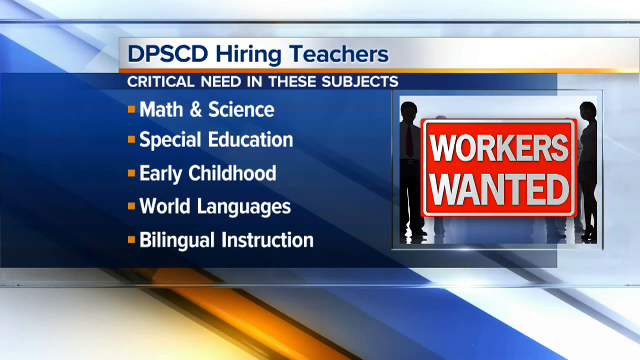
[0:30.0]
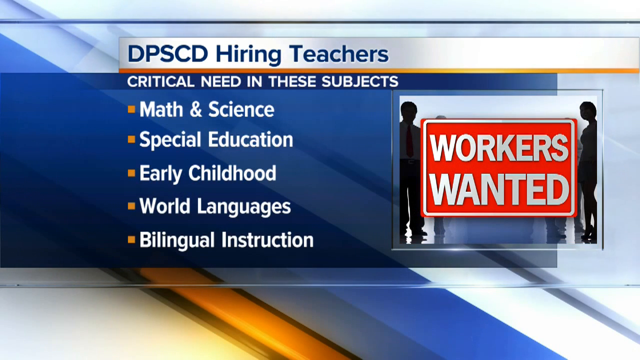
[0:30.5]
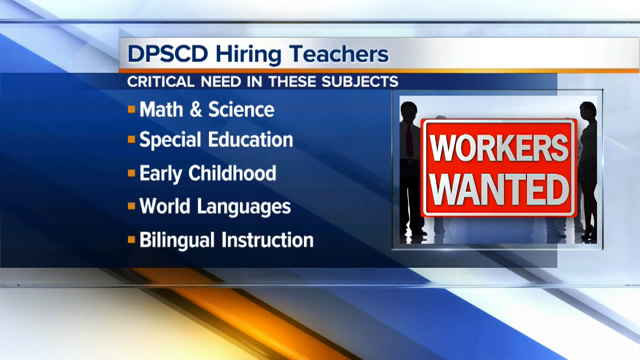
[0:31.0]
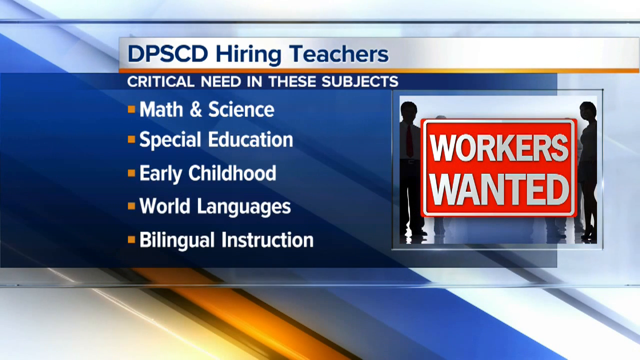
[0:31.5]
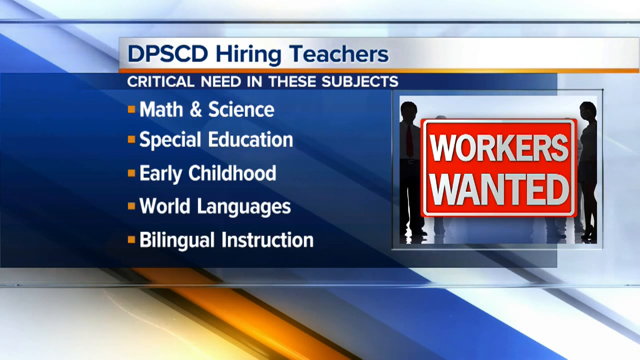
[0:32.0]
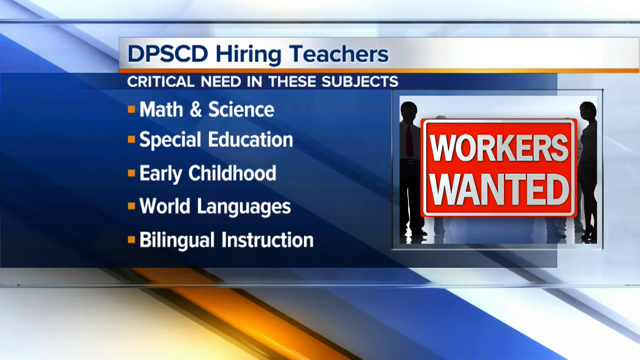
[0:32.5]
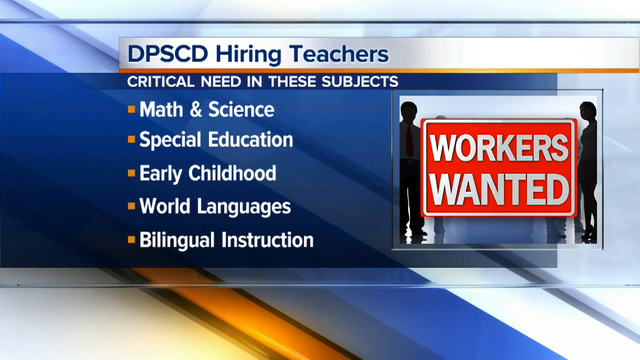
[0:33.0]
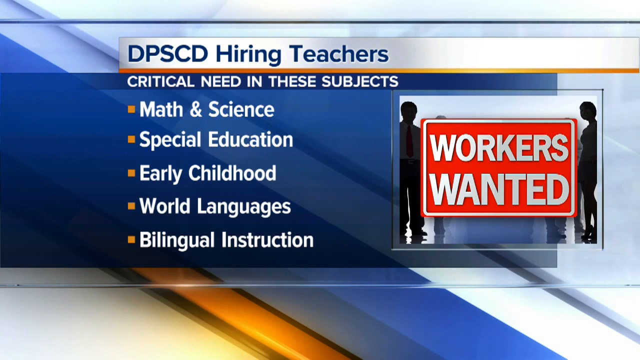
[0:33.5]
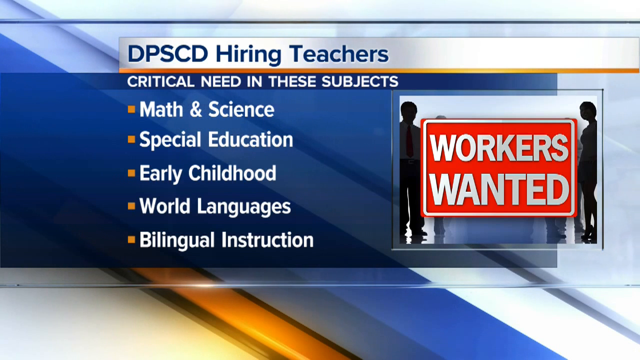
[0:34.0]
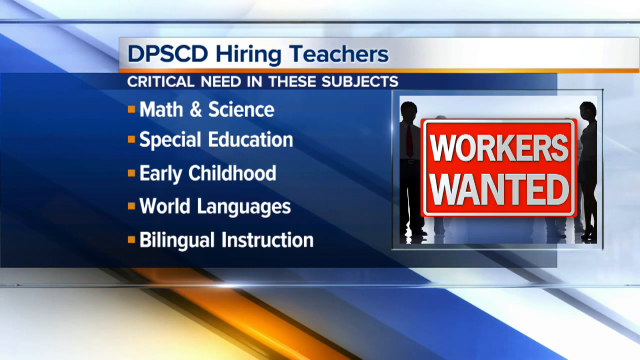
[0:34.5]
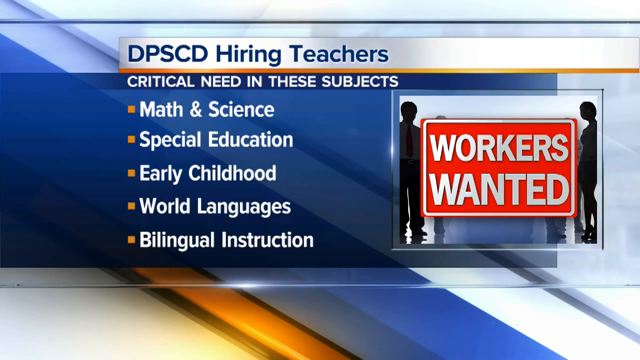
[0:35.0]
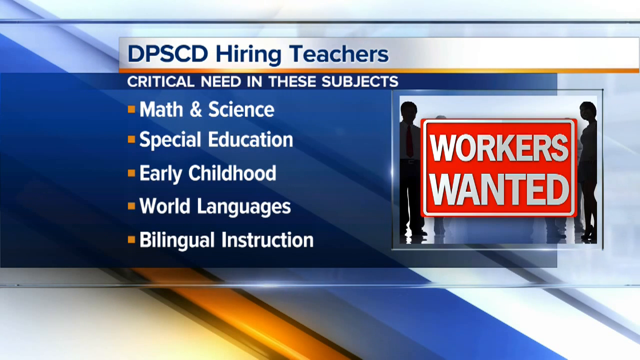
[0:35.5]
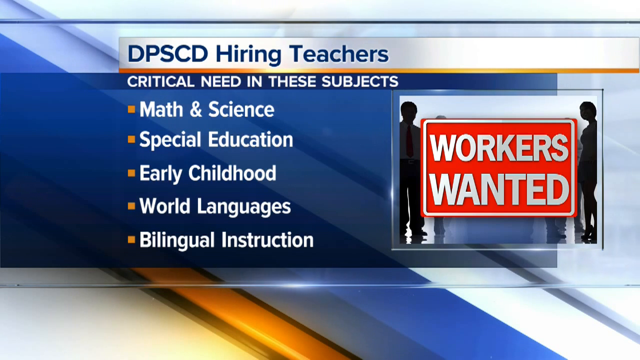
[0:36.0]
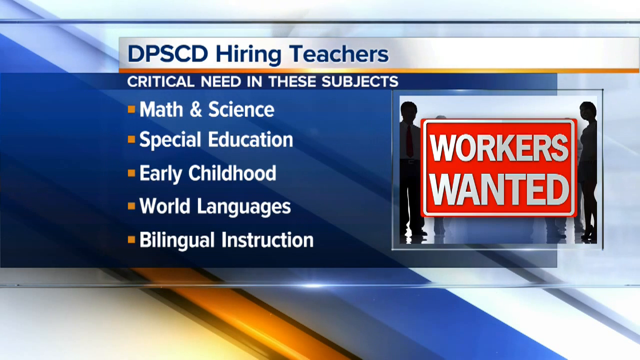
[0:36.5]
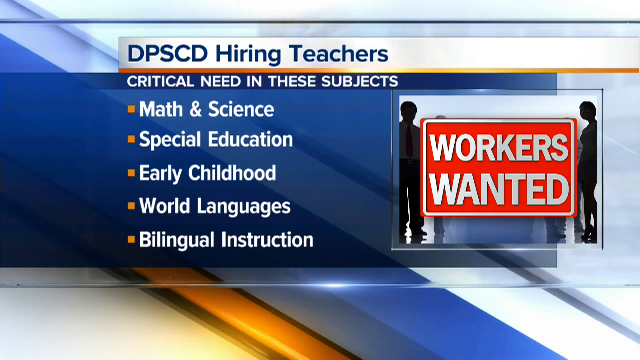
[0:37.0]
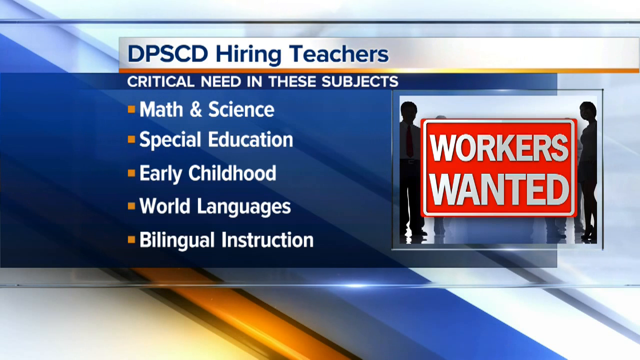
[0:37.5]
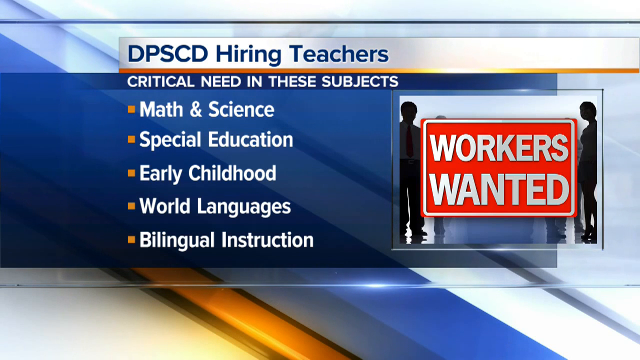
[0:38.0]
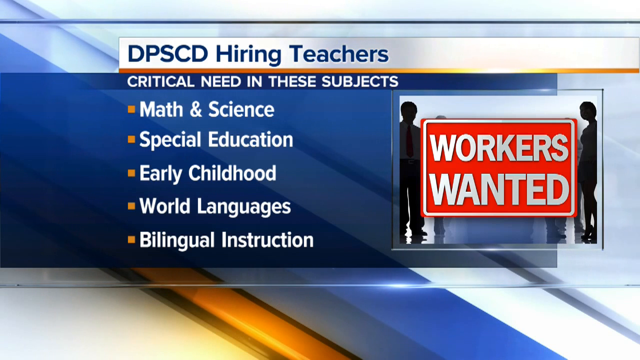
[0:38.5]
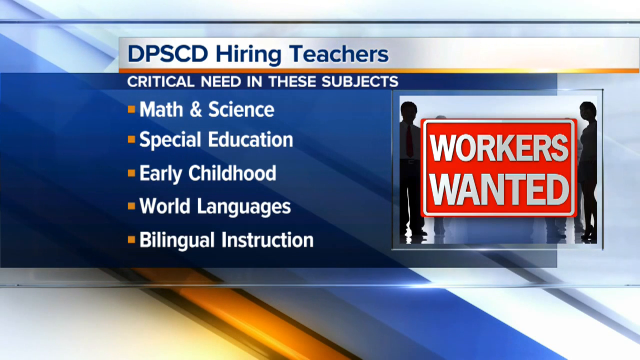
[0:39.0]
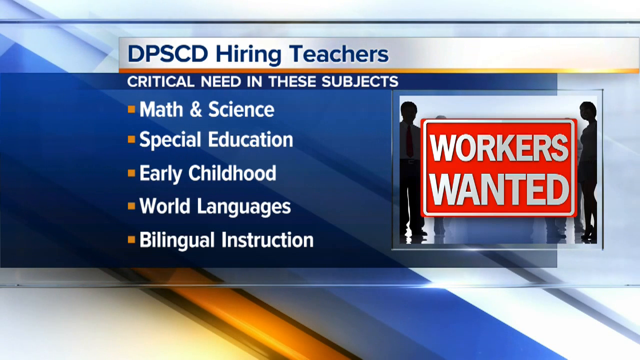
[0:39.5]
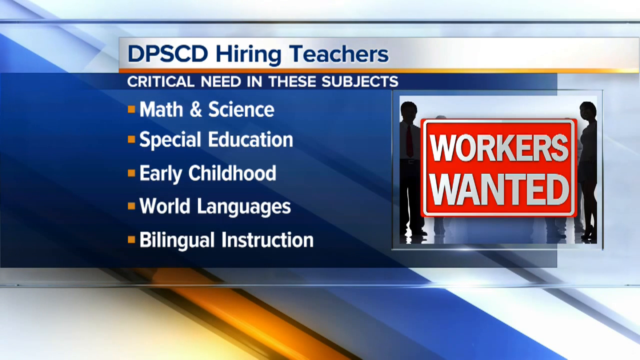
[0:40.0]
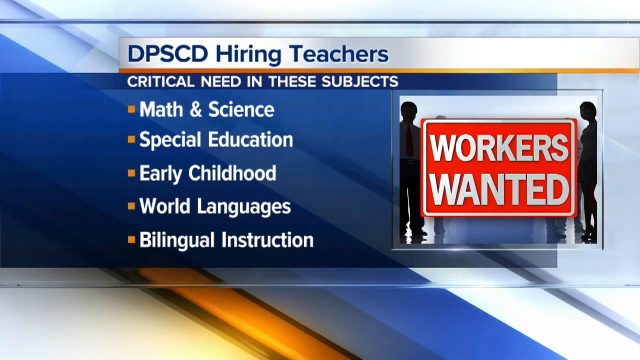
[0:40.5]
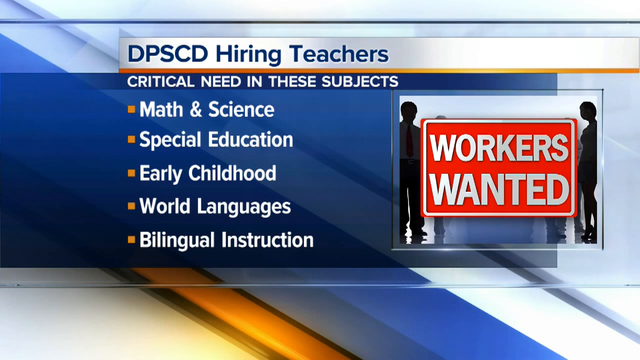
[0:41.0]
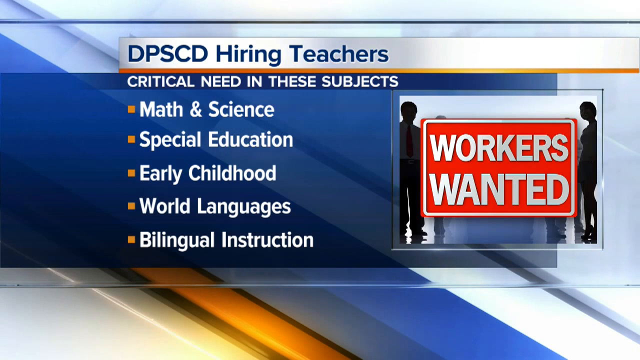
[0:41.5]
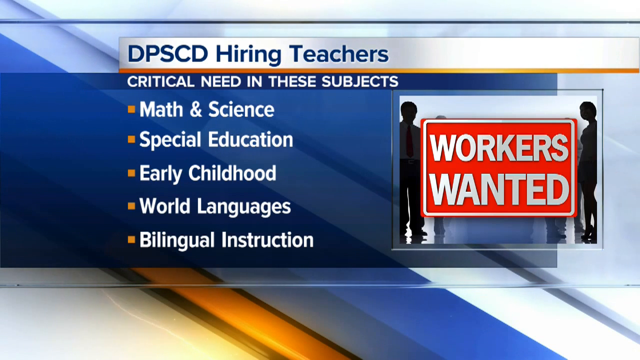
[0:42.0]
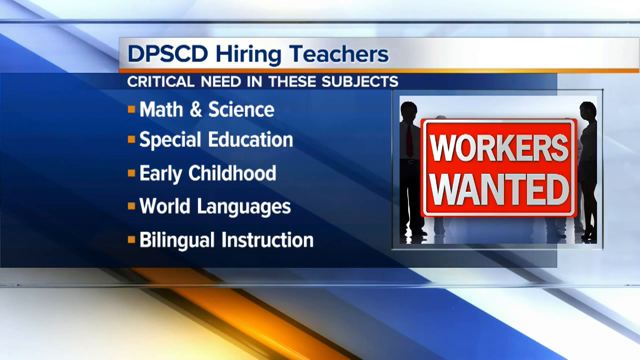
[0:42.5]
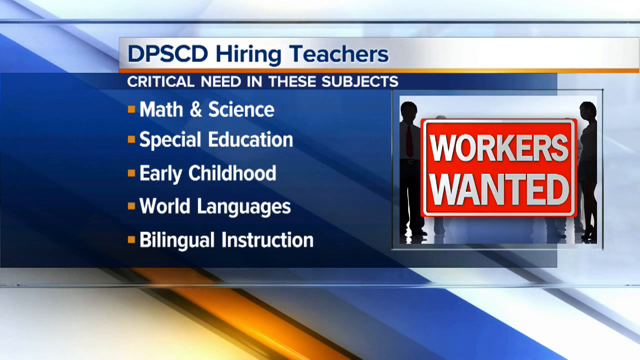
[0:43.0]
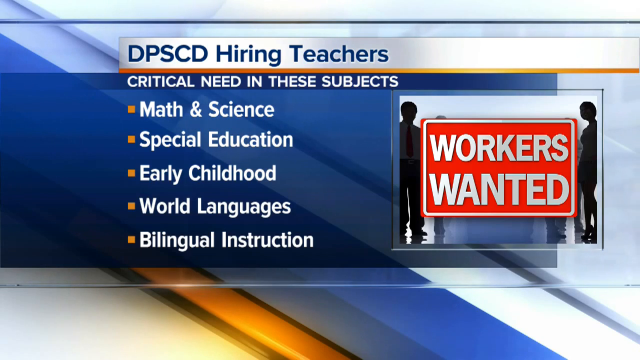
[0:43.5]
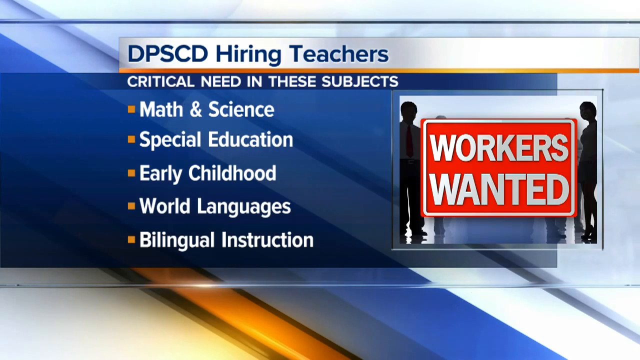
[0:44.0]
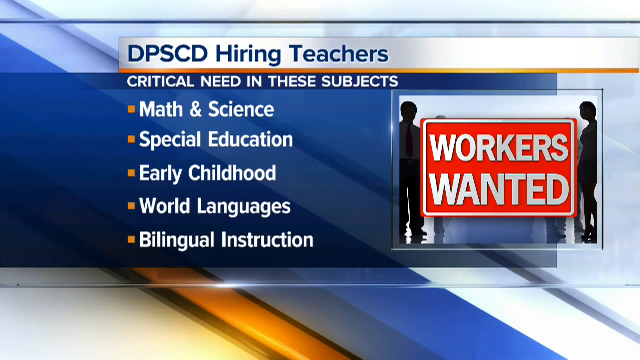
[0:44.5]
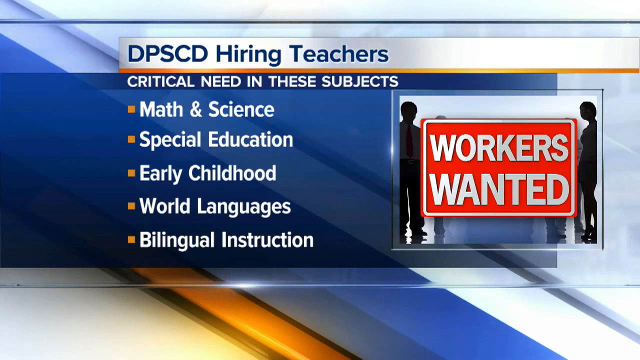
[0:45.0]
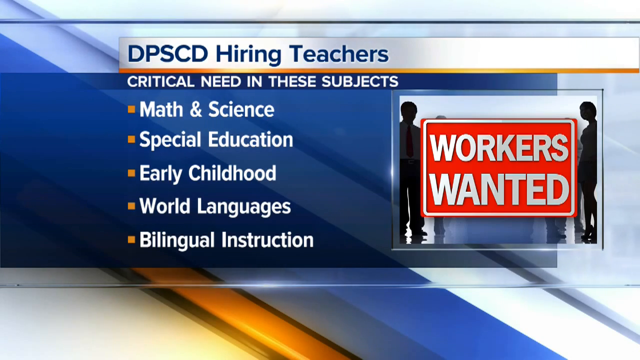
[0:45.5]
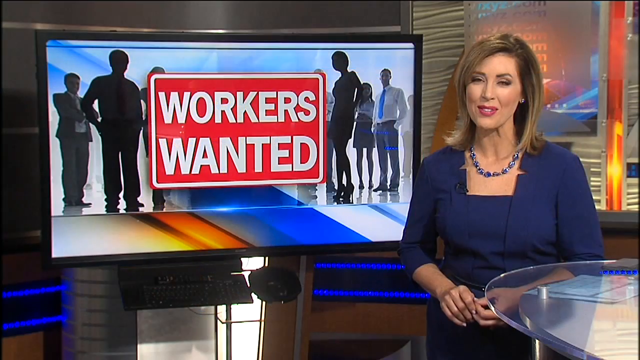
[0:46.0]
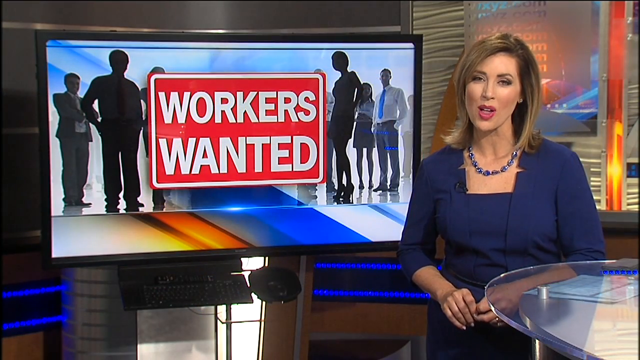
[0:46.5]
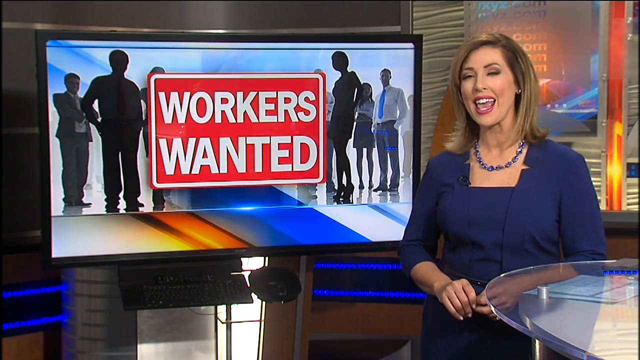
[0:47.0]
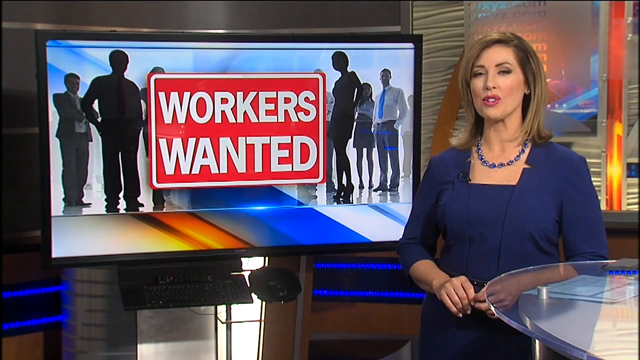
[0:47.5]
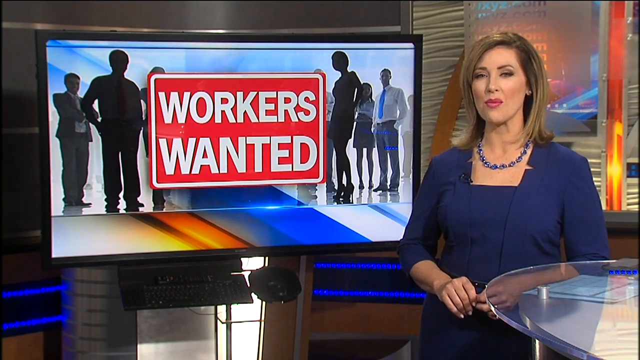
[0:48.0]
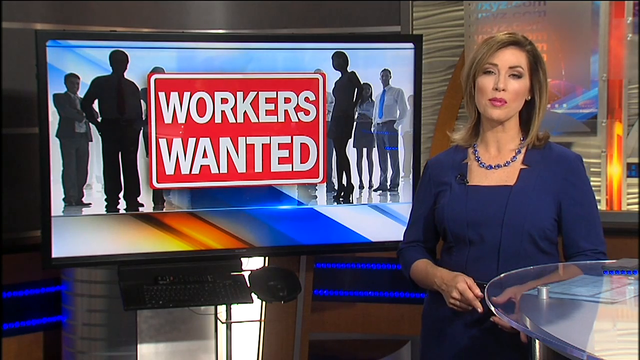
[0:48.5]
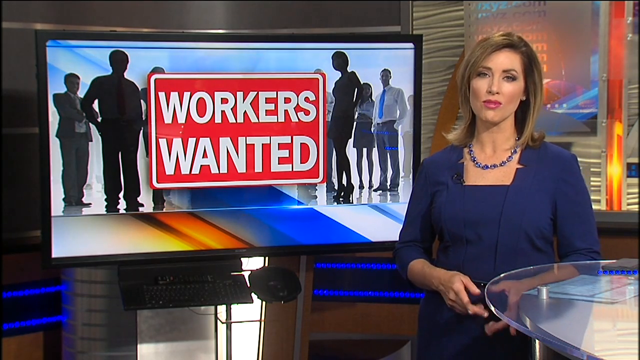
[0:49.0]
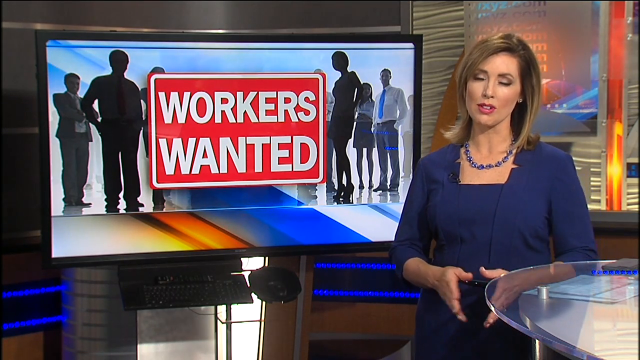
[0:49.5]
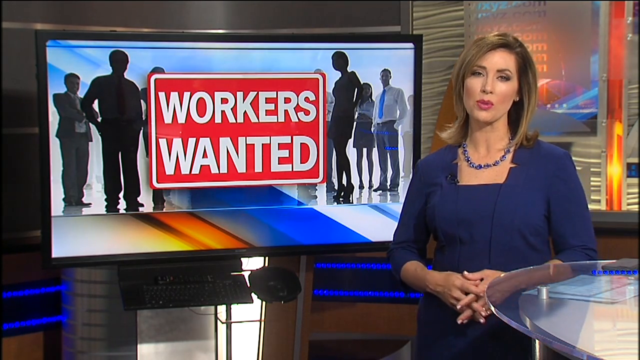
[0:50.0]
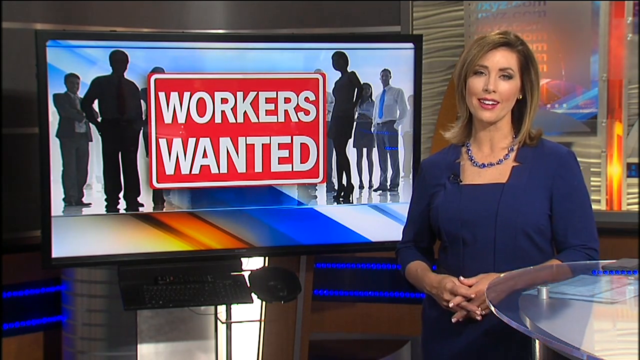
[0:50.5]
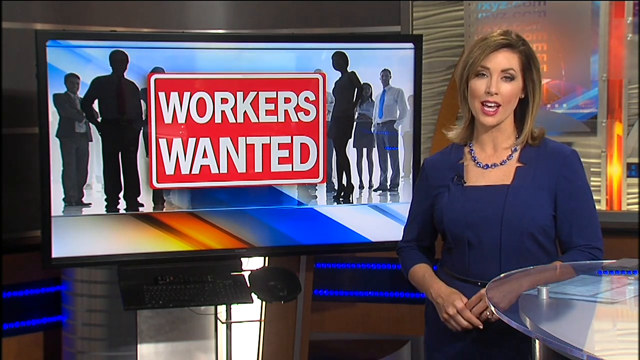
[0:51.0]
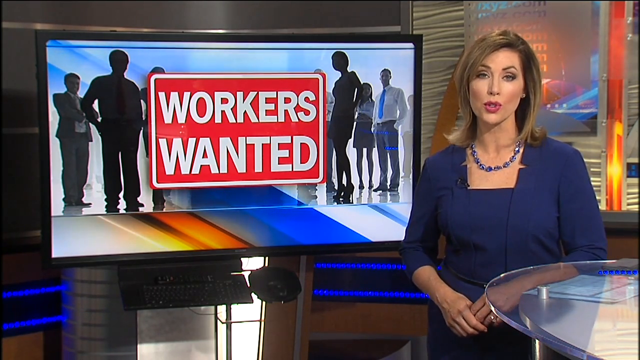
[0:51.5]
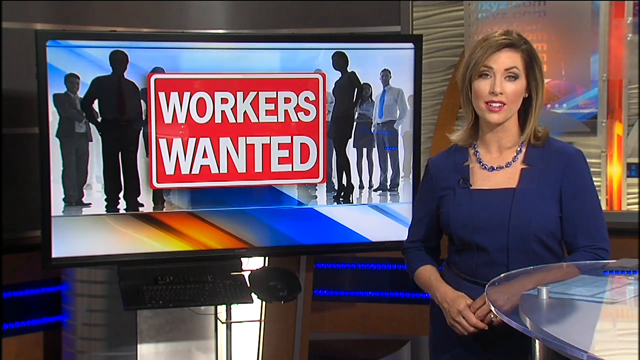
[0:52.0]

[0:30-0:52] The "DPSCD hiring teachers" critical-need screen continues, listing math and science, special education, early childhood, world languages, and bilingual instruction. The video then transitions back to the woman seen earlier, a middle-aged Caucasian news anchor, probably 40, with short brown hair, a blue necklace and blue clothing, shown with a "workers wanted" screen. No other people or animals appear before the video ends.